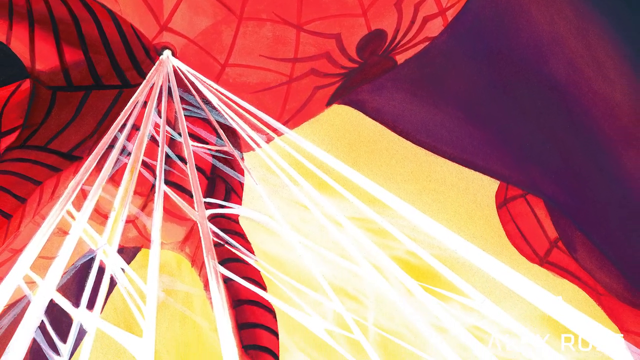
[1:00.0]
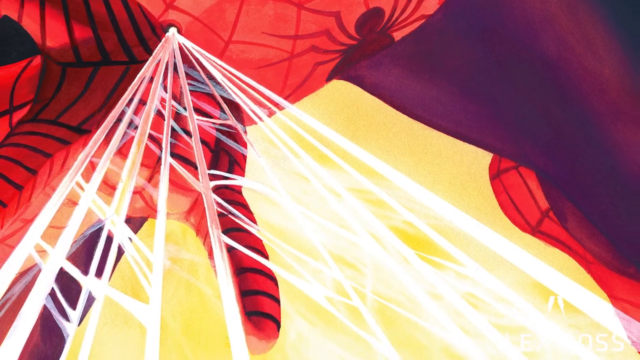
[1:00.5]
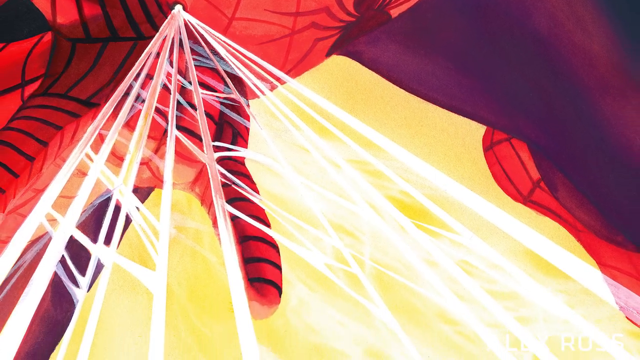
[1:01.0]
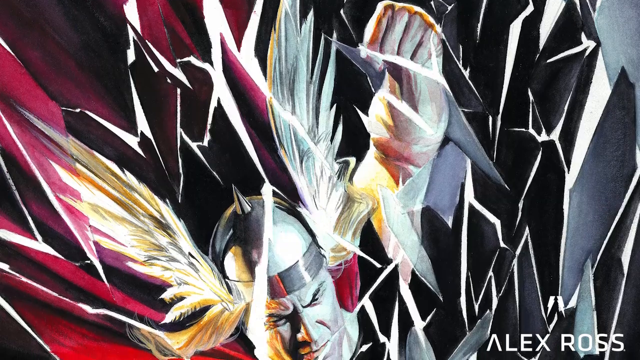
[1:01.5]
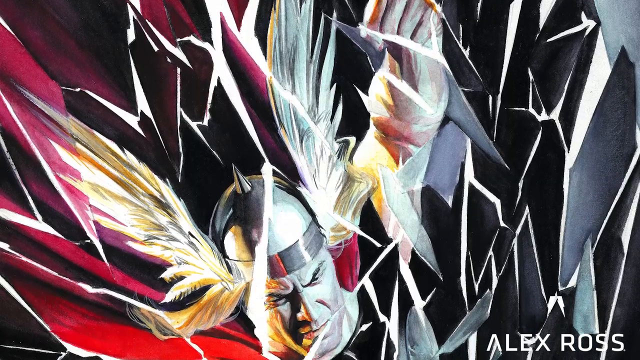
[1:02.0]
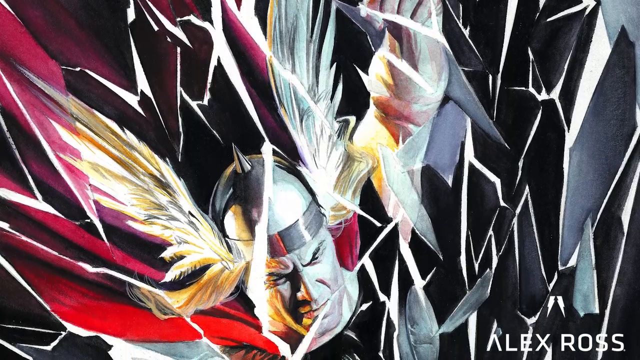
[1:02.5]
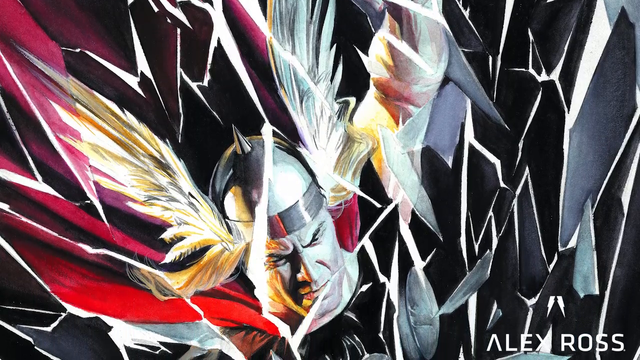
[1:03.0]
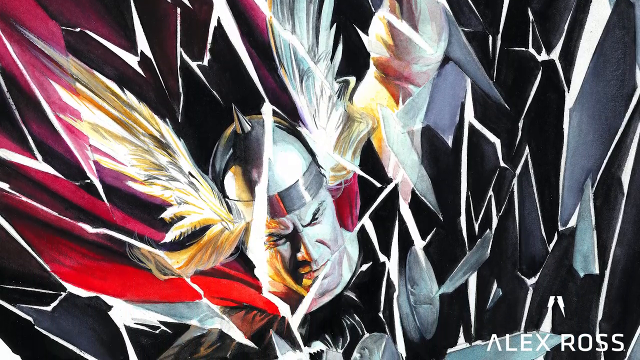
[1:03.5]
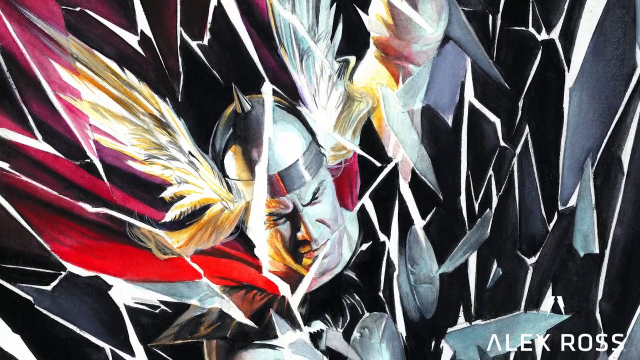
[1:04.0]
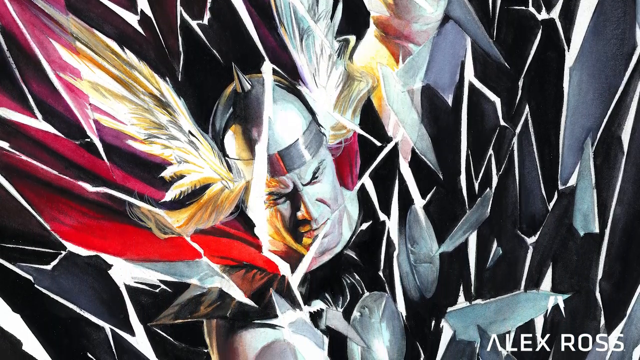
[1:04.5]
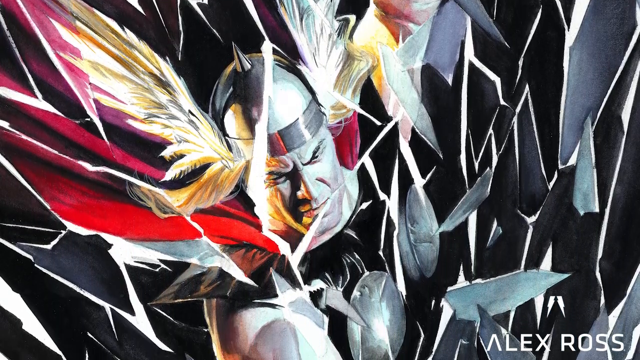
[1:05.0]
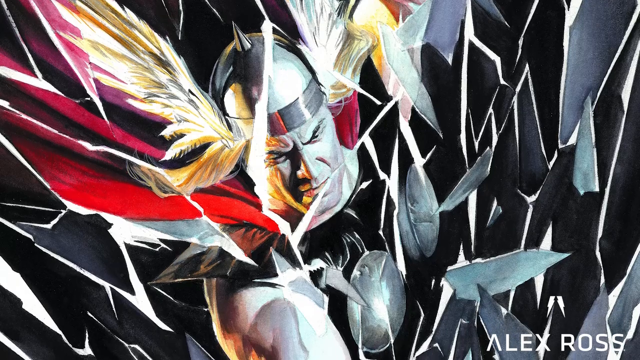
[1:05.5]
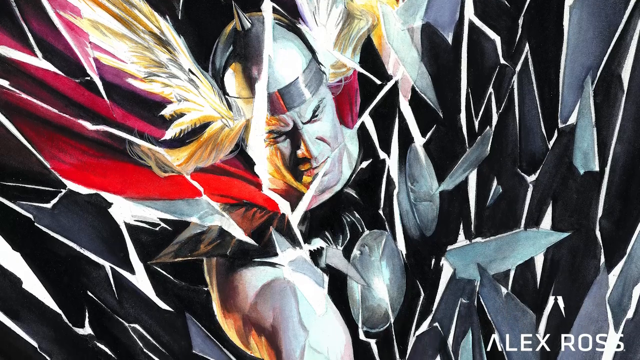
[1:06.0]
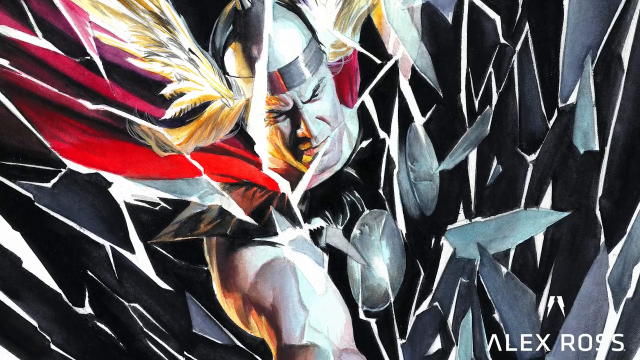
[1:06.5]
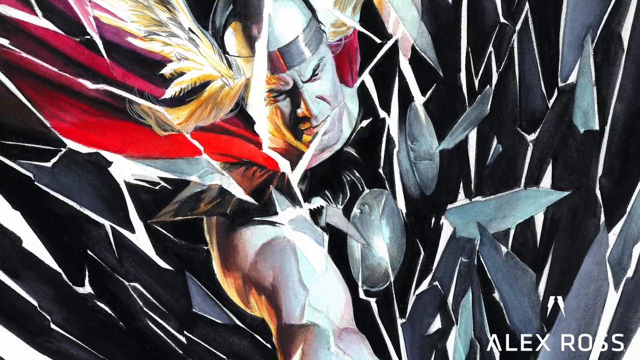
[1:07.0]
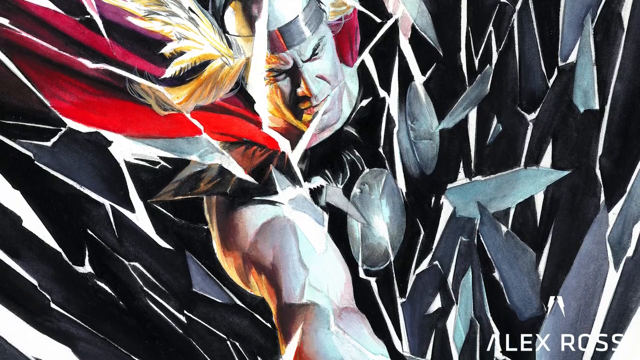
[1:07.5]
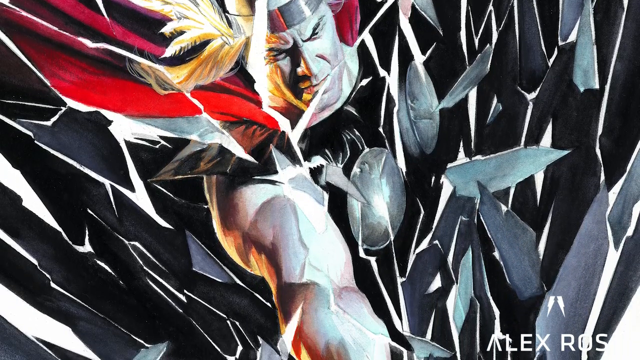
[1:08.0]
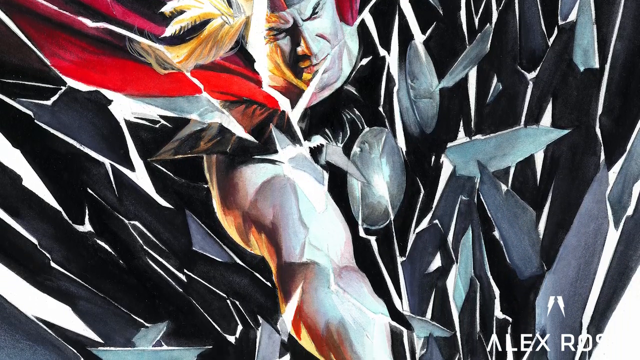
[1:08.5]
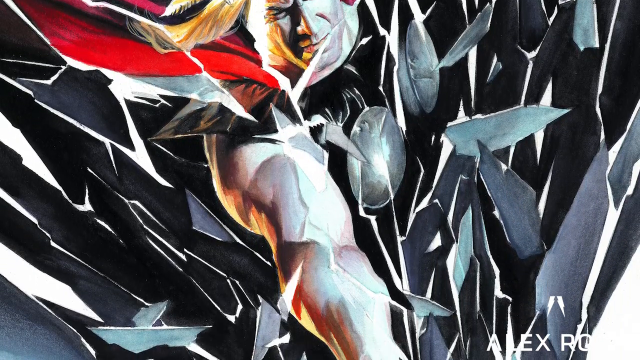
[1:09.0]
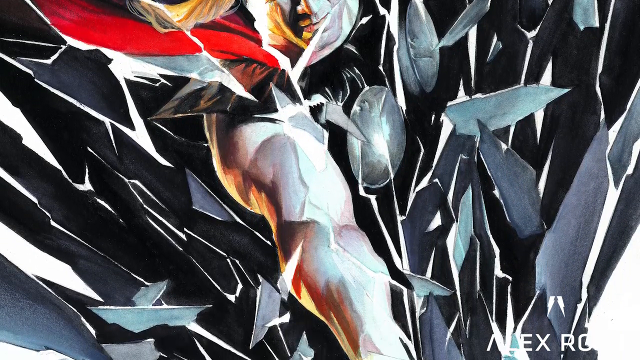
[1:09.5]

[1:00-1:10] Spider-Man is shown in animated form with a web, drawn as white lines, coming out of his wrist, and the spider logo on his chest. This moves away, revealing a yellow background. A character then appears wearing a shiny metal helmet with a sharp conical point on top and feathery wings coming out of the top on either side. The man is frowning, and there are many shards on the picture, as if it is breaking into pieces, with sharp-looking bits flying out of the screen. His hand is then seen pointing forwards. The word "Panther" is glimpsed briefly.